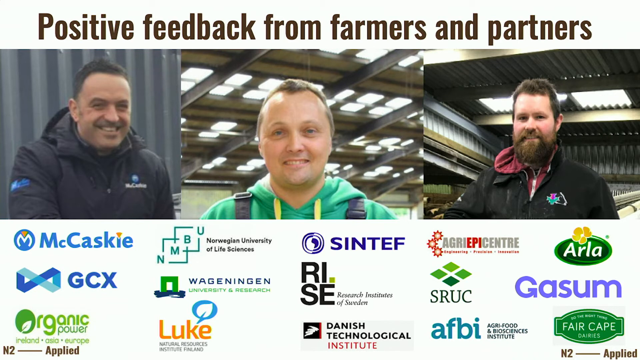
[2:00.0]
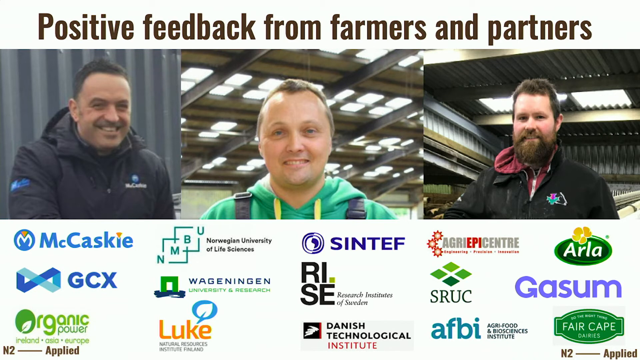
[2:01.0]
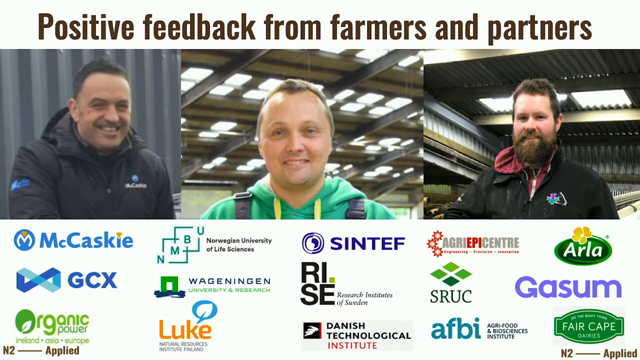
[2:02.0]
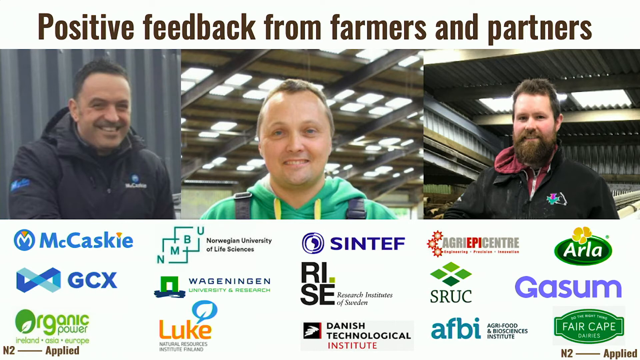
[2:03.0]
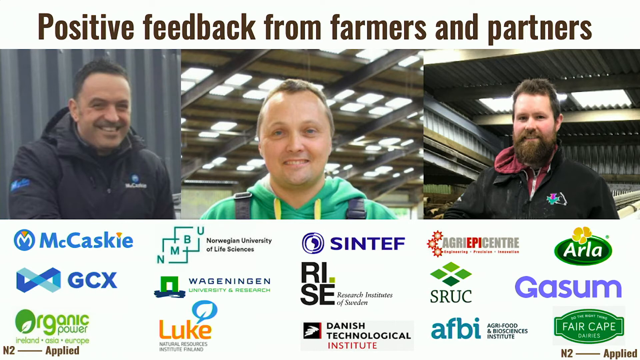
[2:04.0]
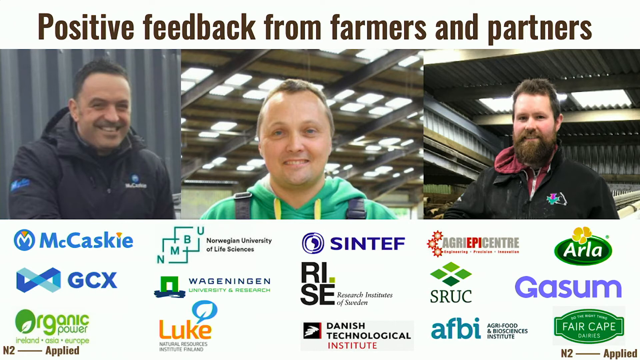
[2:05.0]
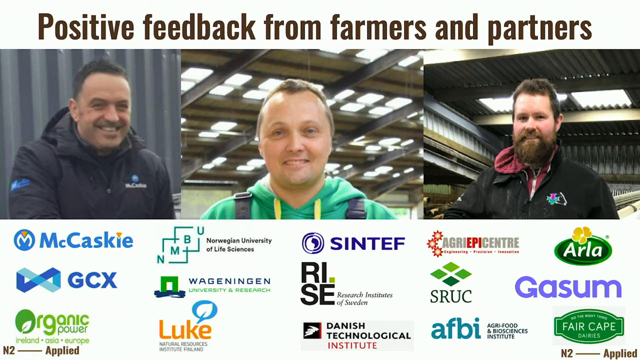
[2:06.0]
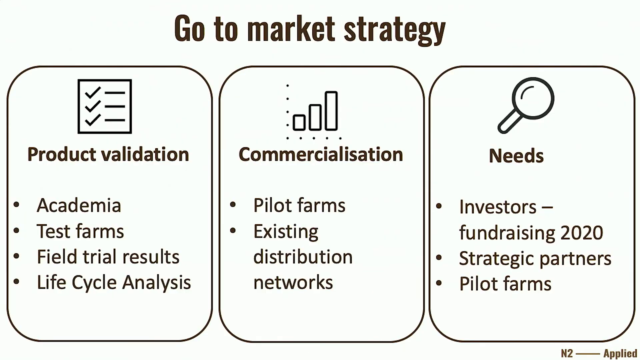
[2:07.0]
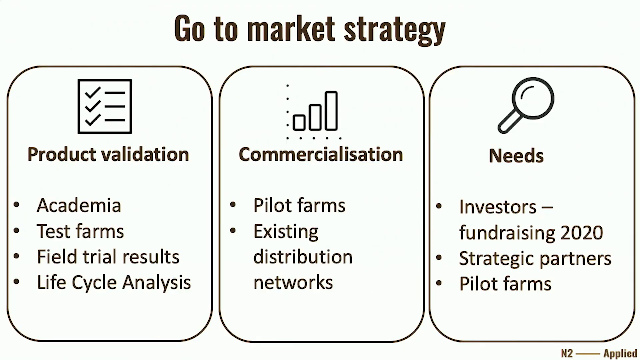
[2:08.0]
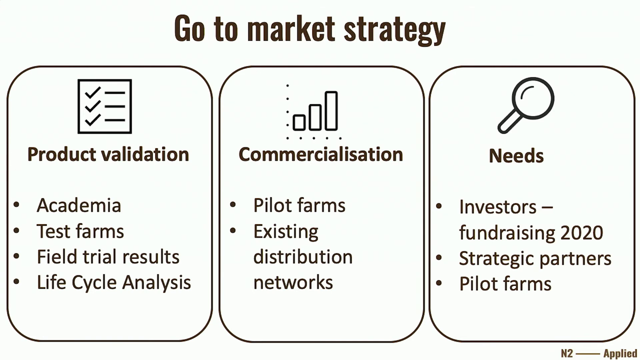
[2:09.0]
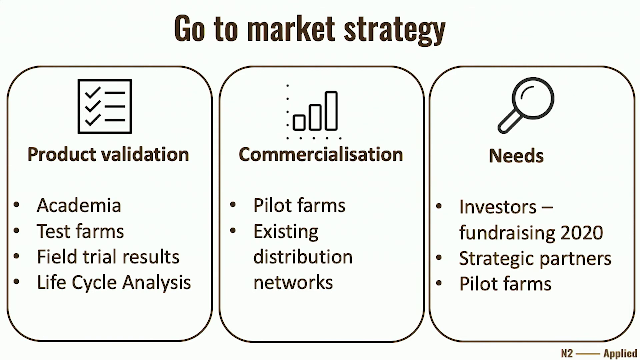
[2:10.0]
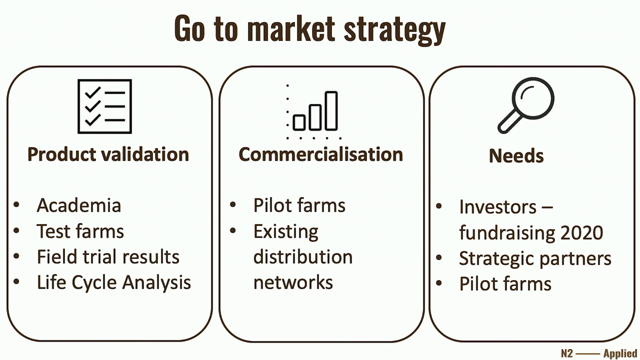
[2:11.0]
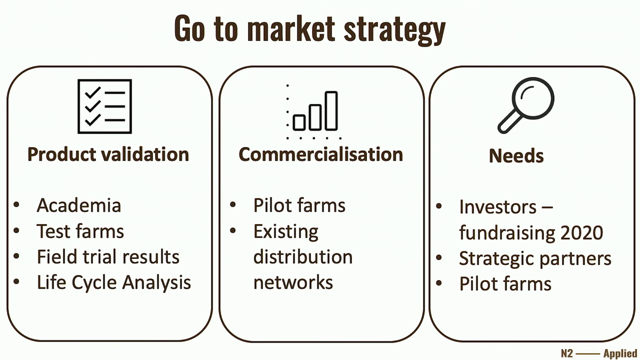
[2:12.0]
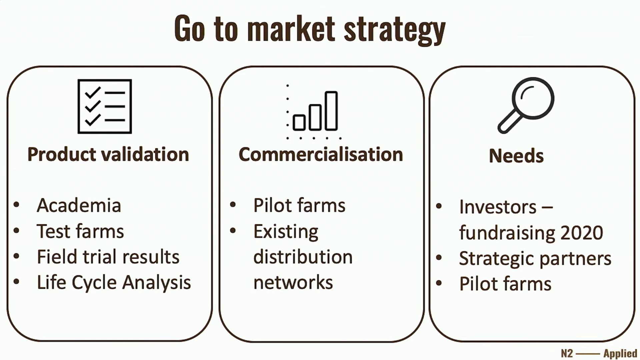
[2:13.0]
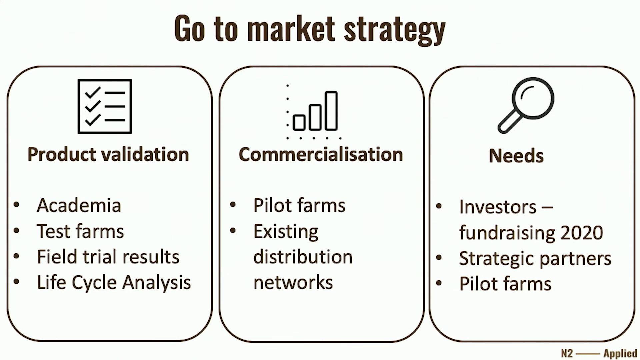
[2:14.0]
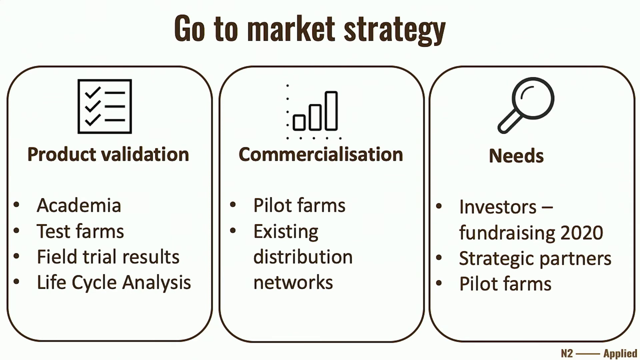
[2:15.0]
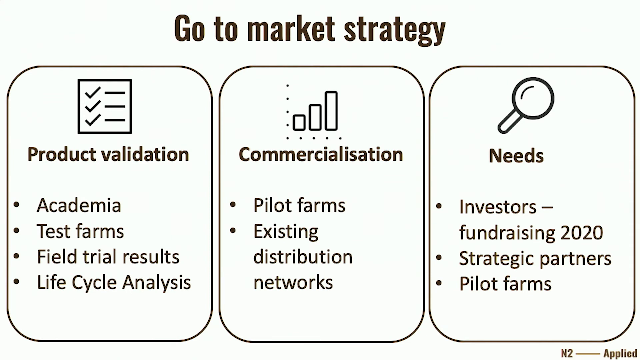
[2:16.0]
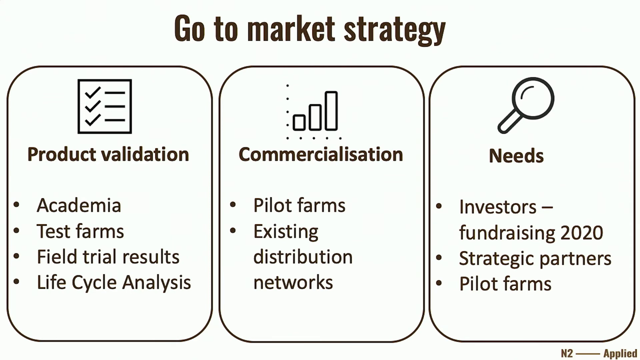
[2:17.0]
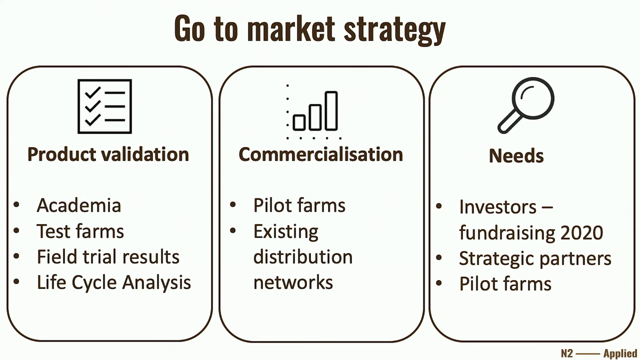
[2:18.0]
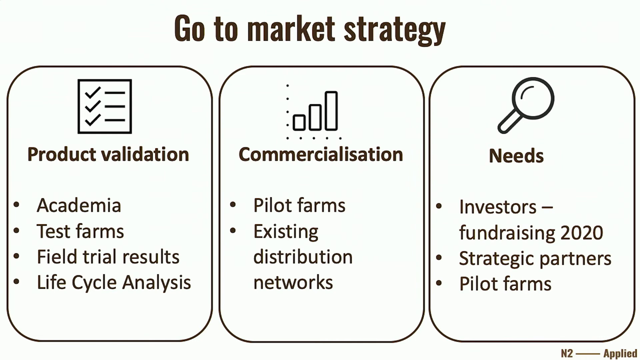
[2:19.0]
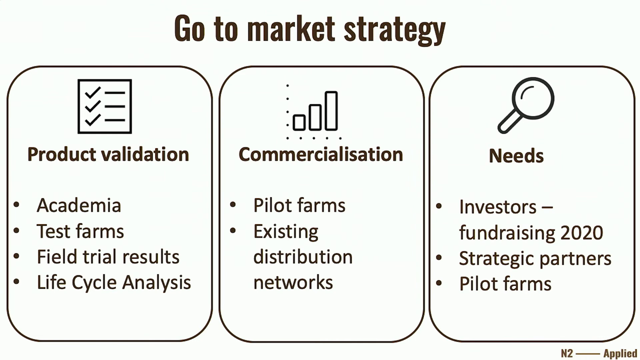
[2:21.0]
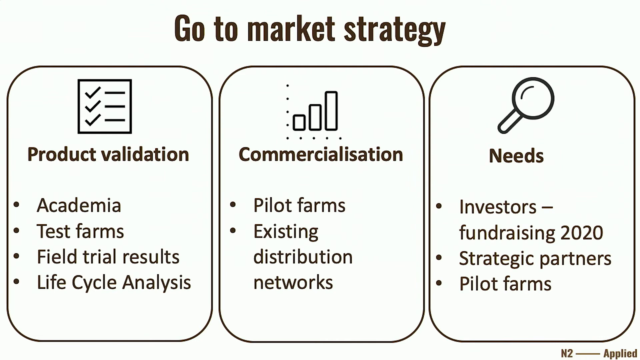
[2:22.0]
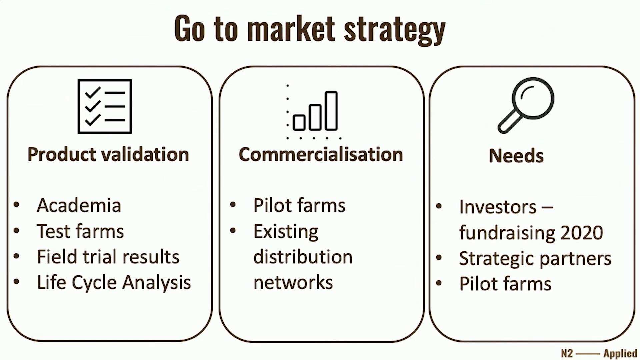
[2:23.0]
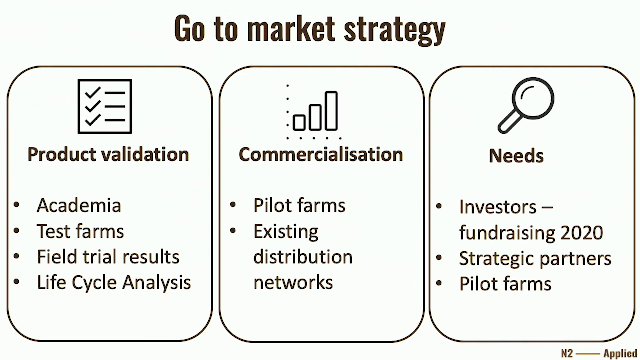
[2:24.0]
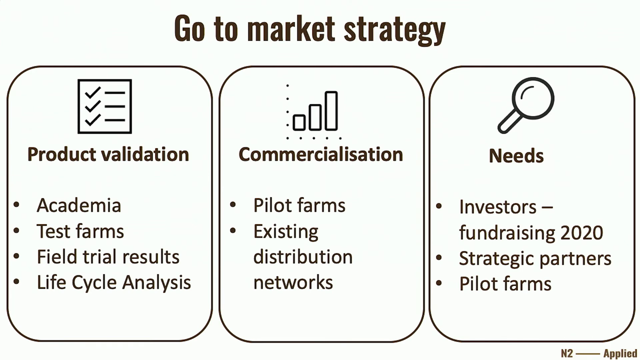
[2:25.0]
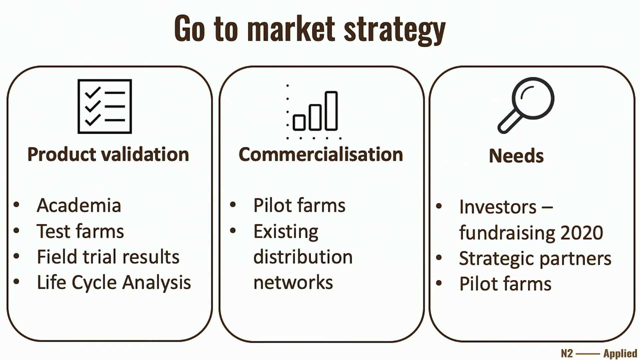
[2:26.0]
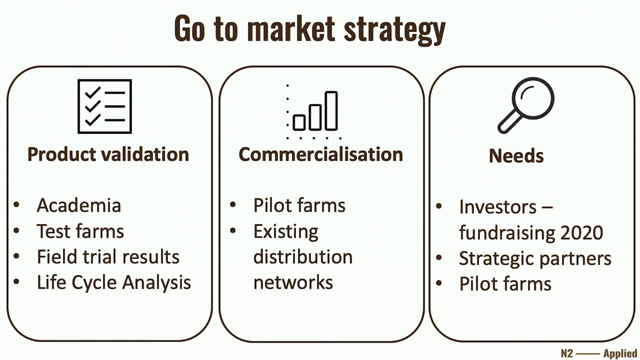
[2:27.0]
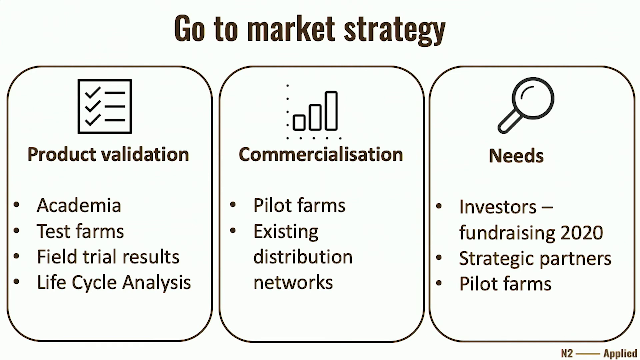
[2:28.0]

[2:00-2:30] Color photos of three Caucasian men fill the top half of the screen, under the heading "positive feedback from farmers and partners". The three men are possibly farmers, all in what look like processing plants. Below is a number of their partners or sponsors, from left to right: in blue text, a company called McCaskie, then GCX below it; to the right, Norwegian University of Life Sciences; then a company called RISE; and finally GASM, ARLA and SRUC. The screen then changes to a white background with dark text at the top reading "Go-To-Market Strategy", broken down into three boxes. On the left, "Product Validation", with bullet points "Academia", "Test Farms", "Field Trial Results" and "Life Cycle Analysis". Next, "Commercialization", with bullet points "Pilot Farms" and "Existing Distribution Networks". Then "Needs", with an illustration of a magnifying glass and the points "Investors", "Fundraising 2020", "Strategic Partners" and "Pilot Farmers".